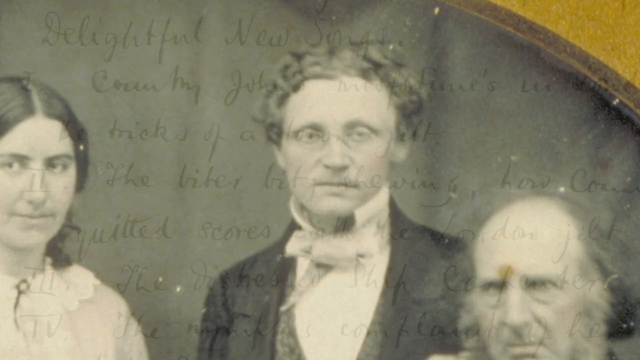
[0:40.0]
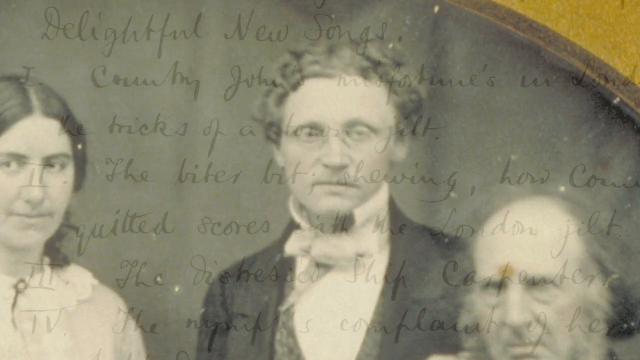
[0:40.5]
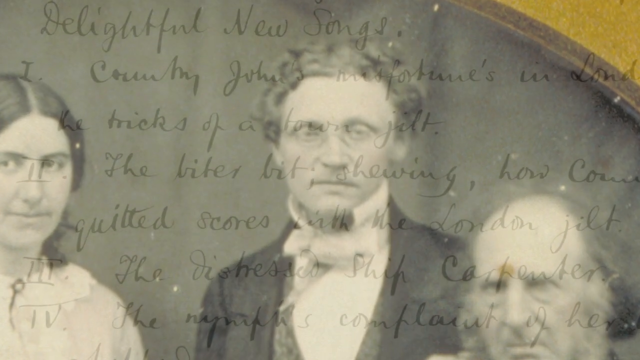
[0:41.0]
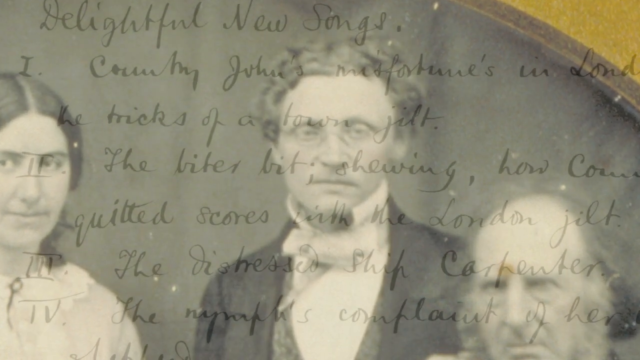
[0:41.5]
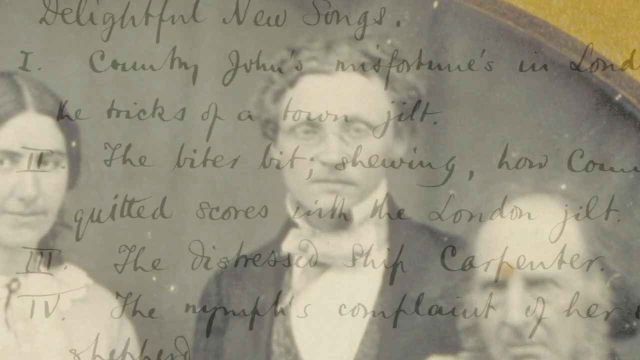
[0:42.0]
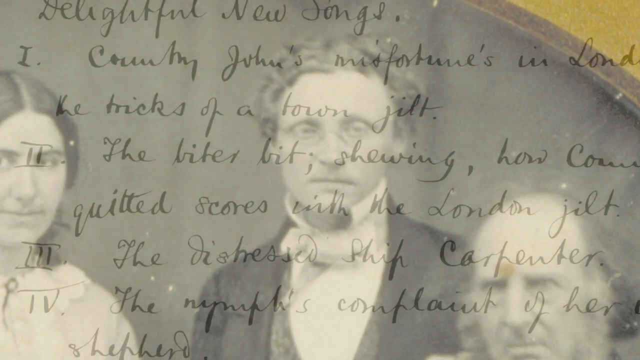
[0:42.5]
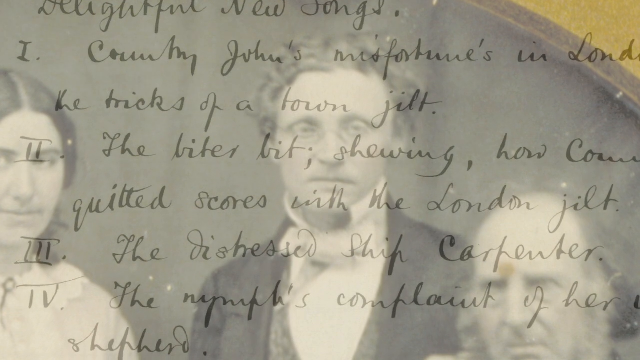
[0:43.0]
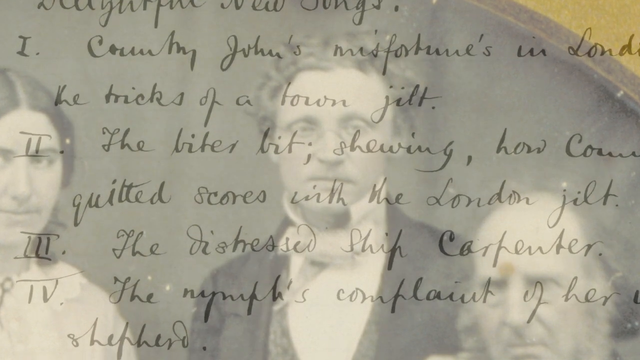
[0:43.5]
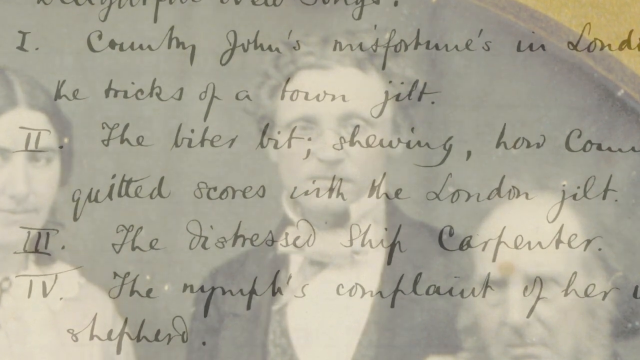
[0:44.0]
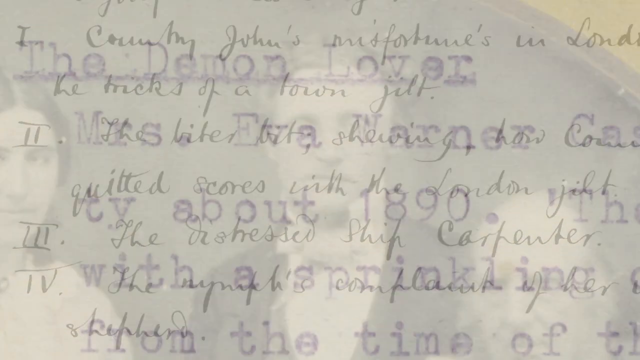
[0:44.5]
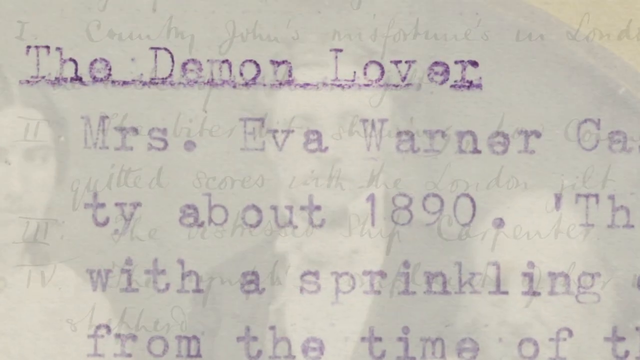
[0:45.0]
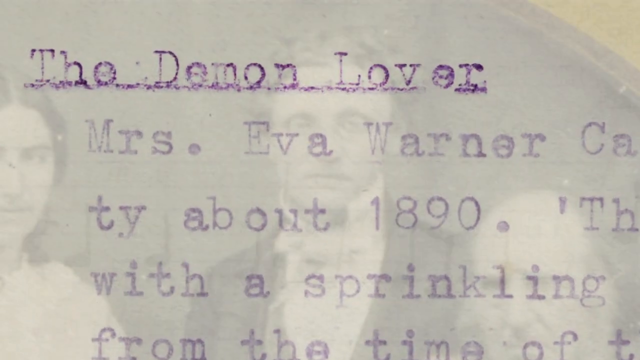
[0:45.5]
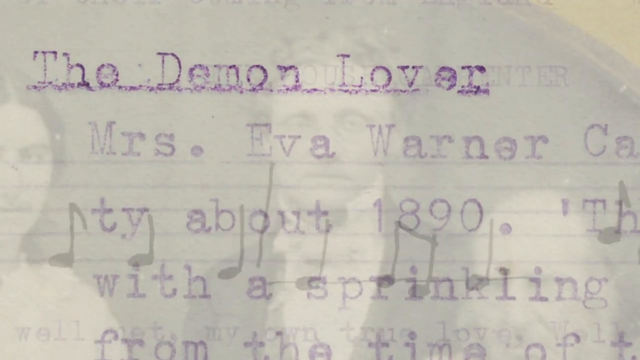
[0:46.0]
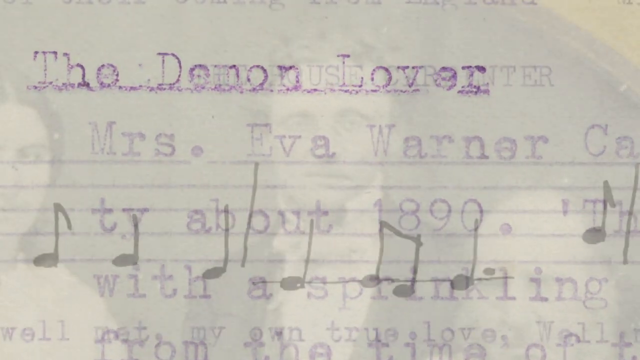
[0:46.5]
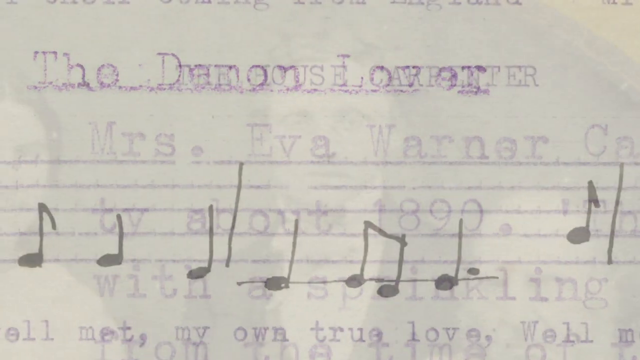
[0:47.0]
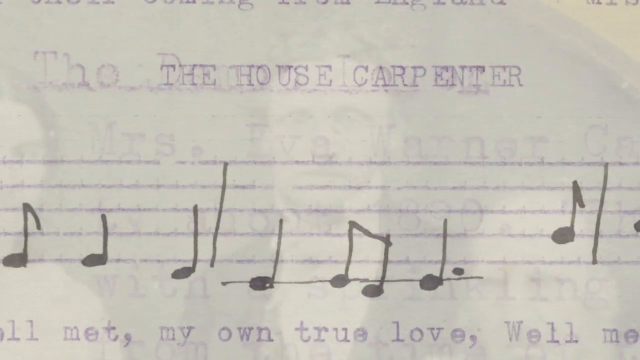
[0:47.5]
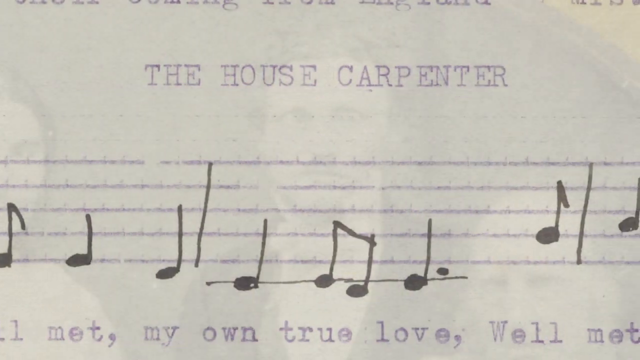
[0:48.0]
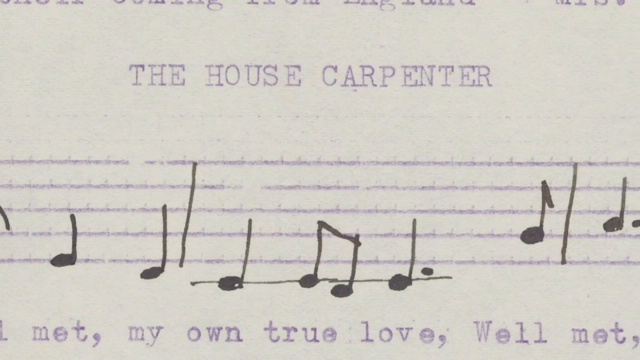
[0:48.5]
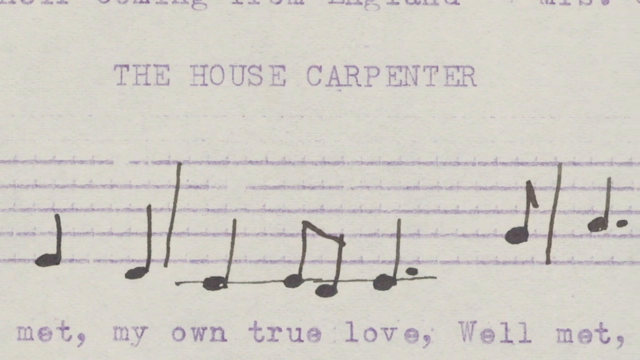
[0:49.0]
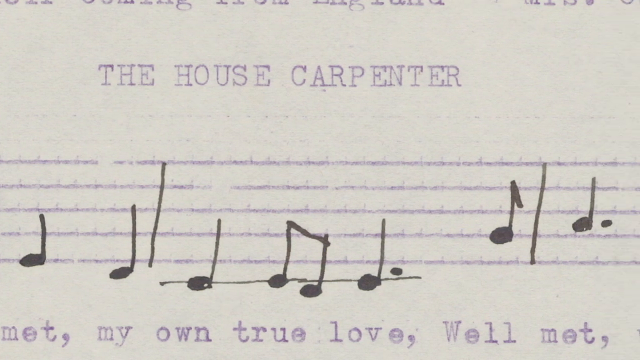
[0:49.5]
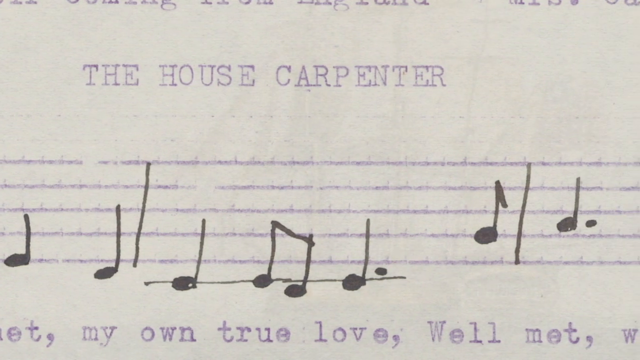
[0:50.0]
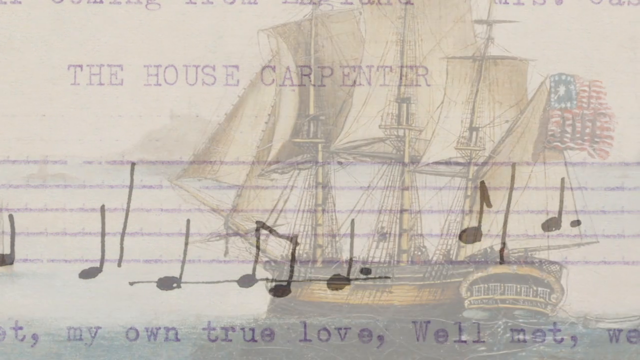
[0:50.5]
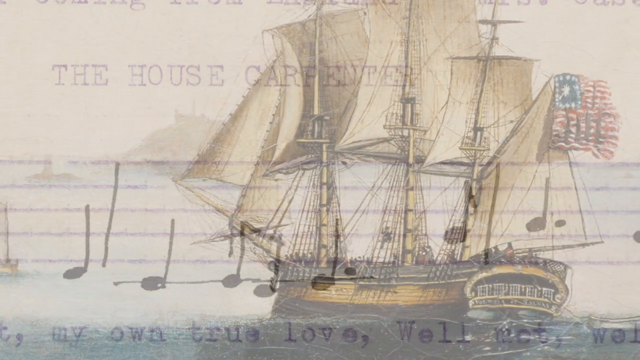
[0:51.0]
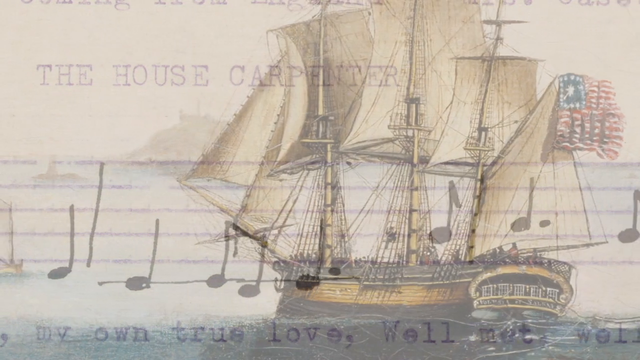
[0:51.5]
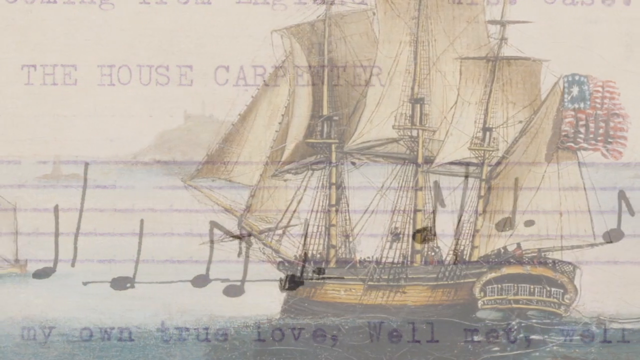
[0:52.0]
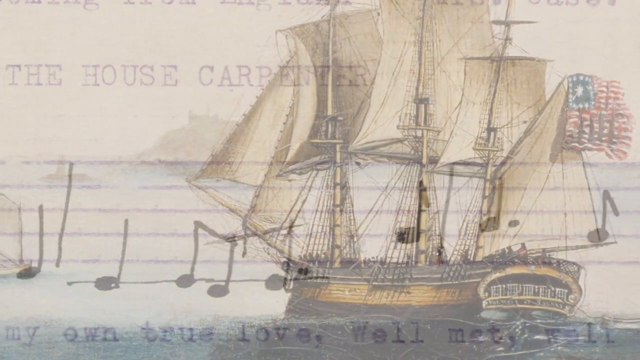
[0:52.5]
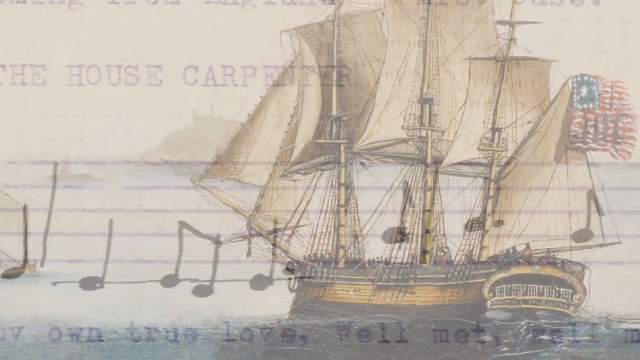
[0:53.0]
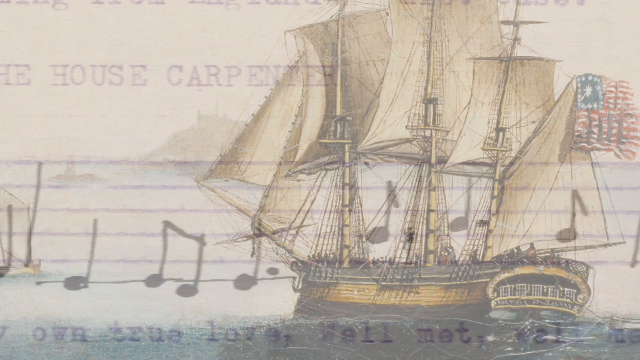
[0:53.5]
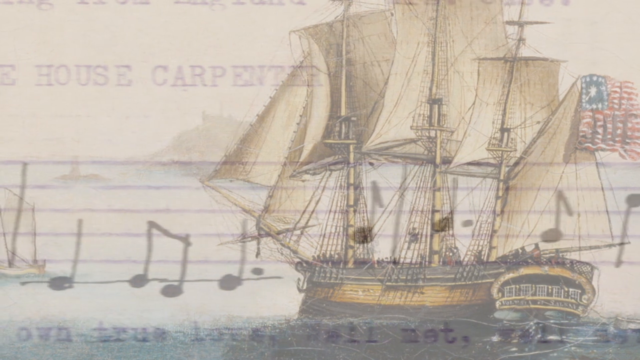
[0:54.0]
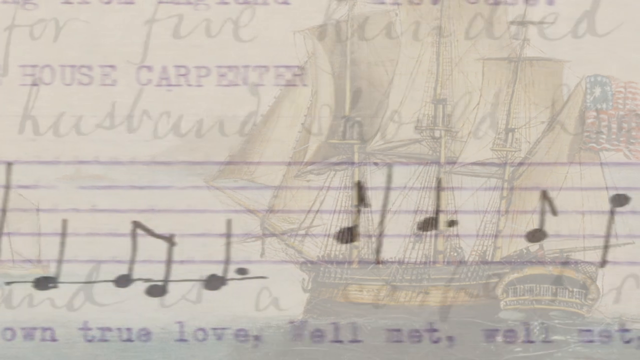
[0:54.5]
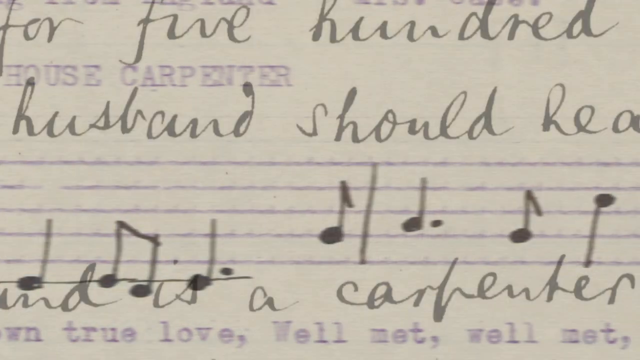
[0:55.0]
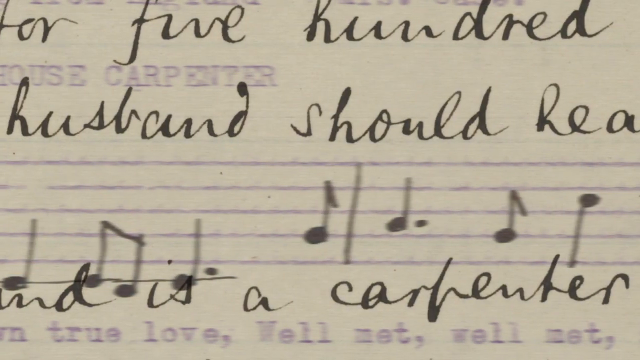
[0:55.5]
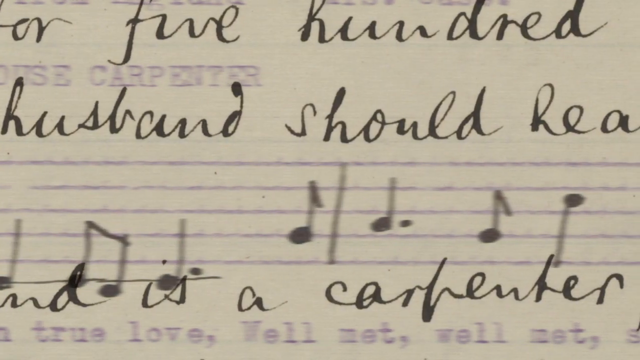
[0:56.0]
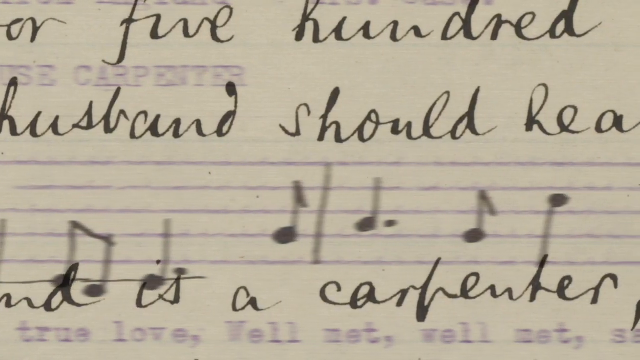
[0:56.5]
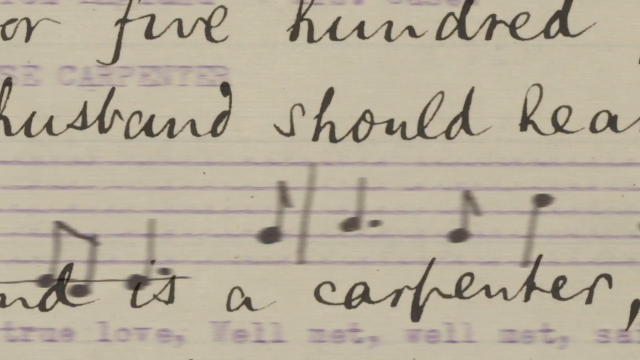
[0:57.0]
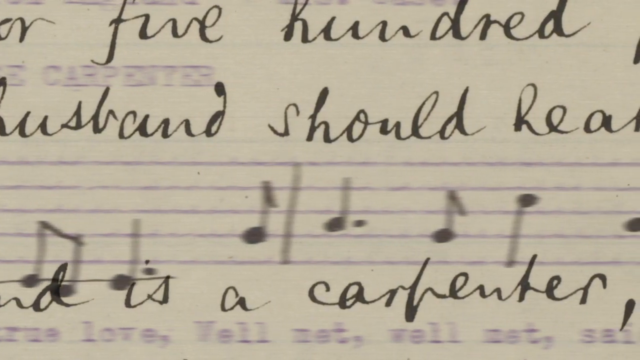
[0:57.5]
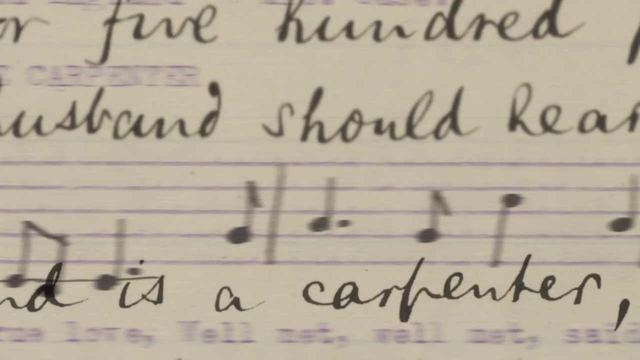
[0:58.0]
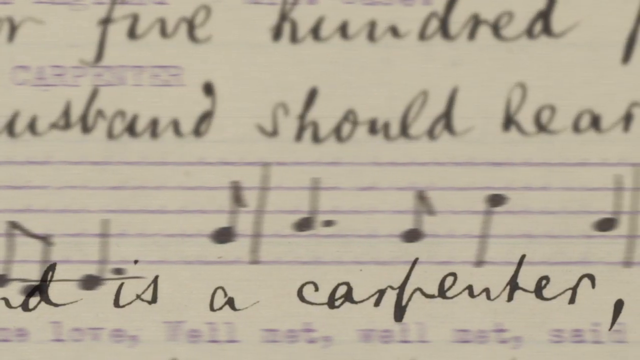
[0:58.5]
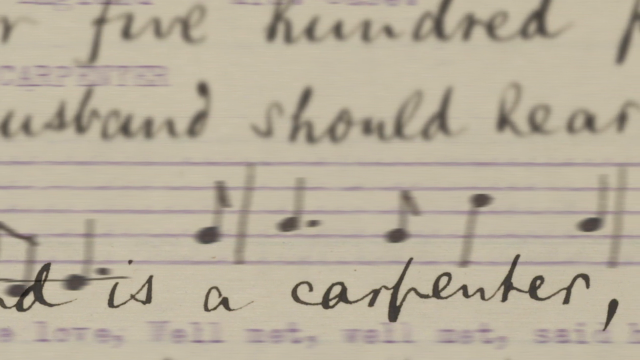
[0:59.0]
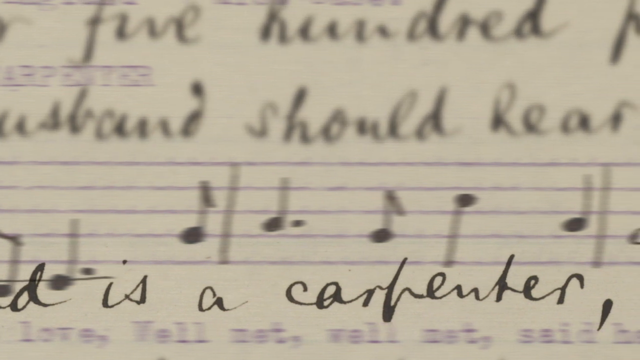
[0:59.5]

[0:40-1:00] The old black-and-white picture shows the woman on the left, the man just right of center, and the balding man sitting down. Cursive handwriting comes in as the picture slowly fades out. The handwriting is partly illegible and includes the words "ship carpenter." A white background follows with bluish-black text reading "This is the demon lover miss Eva Warner," along with something about 1890. Musical notes appear with "the house carpenter" written at the top. The video cuts to one of the sailing ships with a US flag, superimposed with the musical notes.